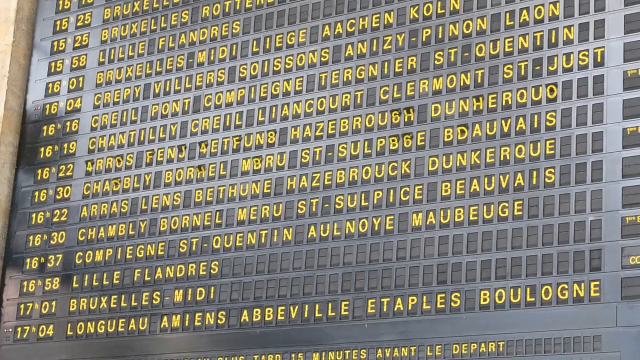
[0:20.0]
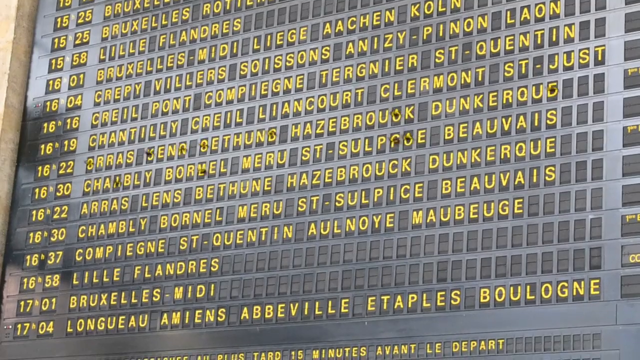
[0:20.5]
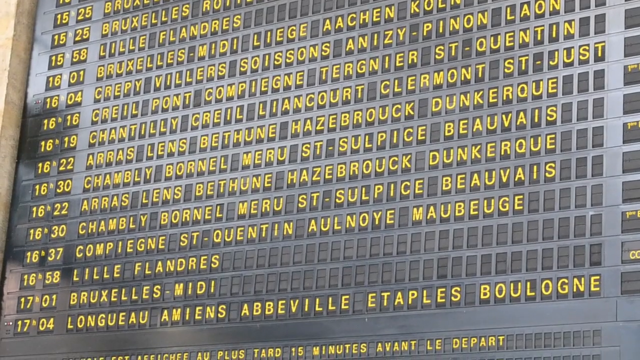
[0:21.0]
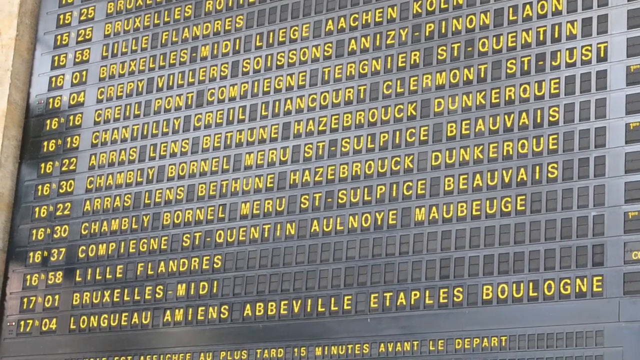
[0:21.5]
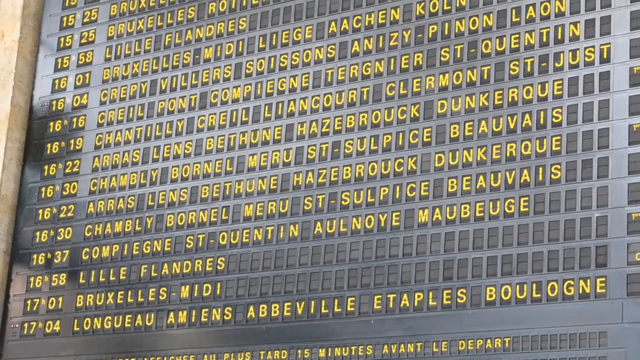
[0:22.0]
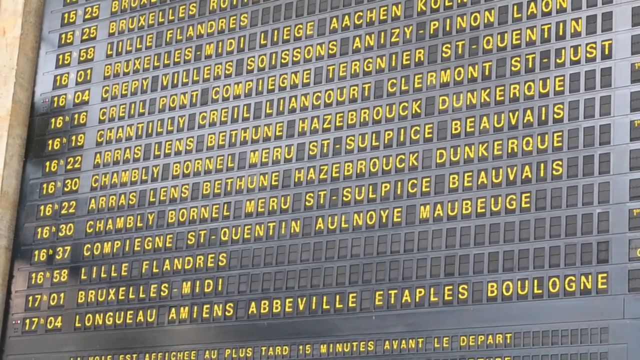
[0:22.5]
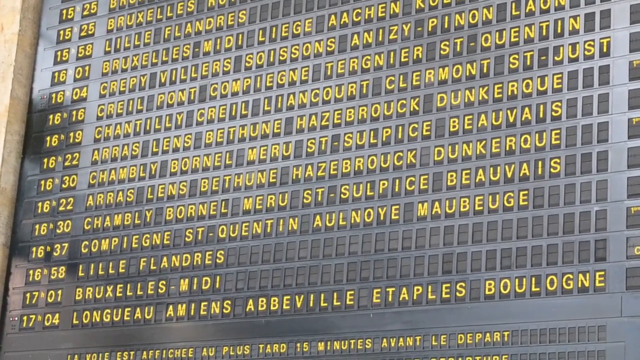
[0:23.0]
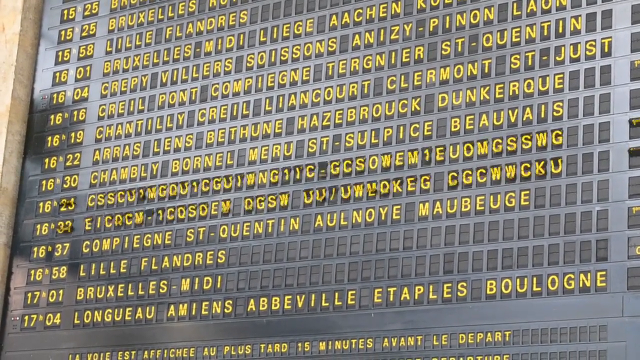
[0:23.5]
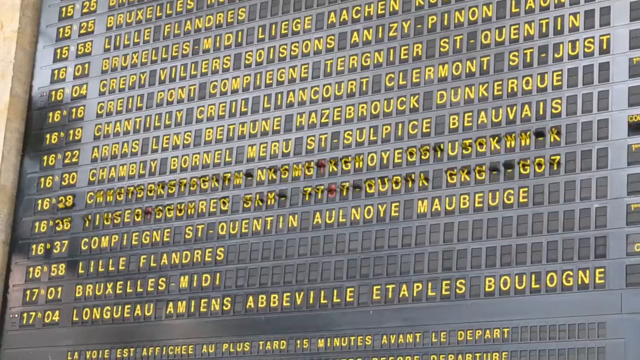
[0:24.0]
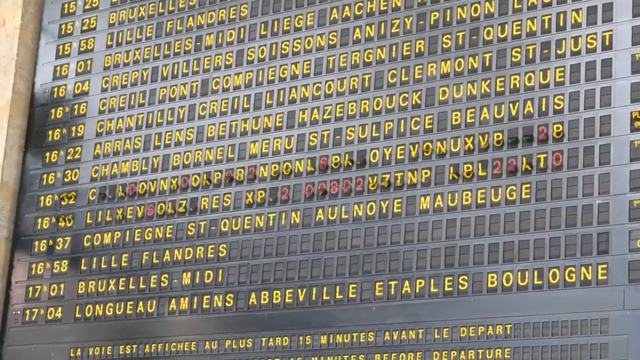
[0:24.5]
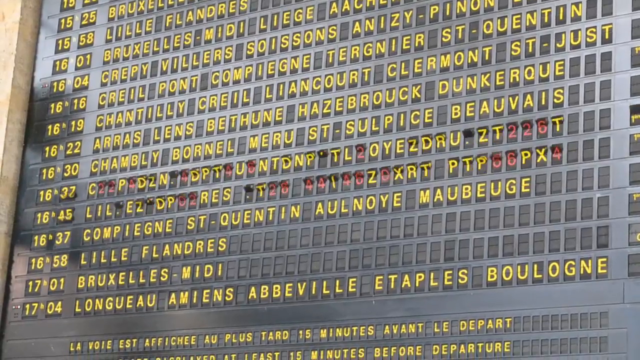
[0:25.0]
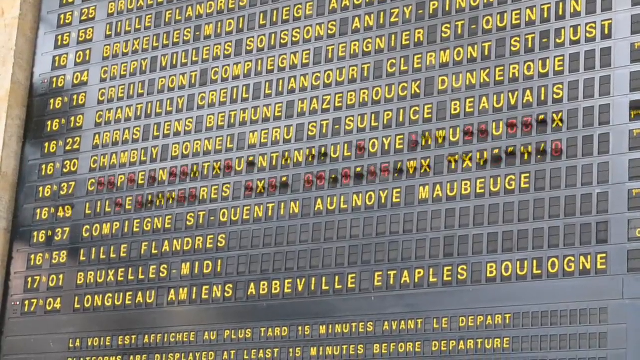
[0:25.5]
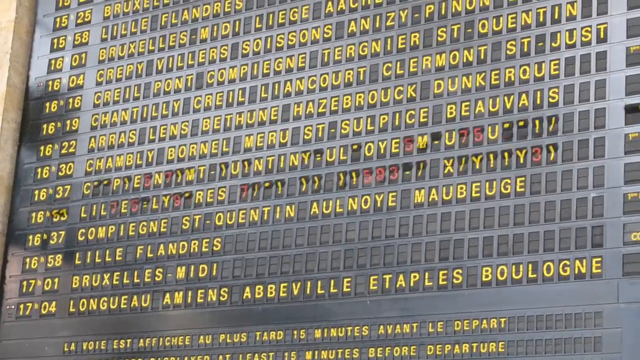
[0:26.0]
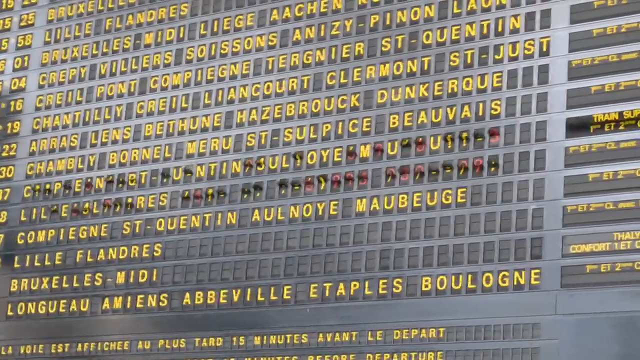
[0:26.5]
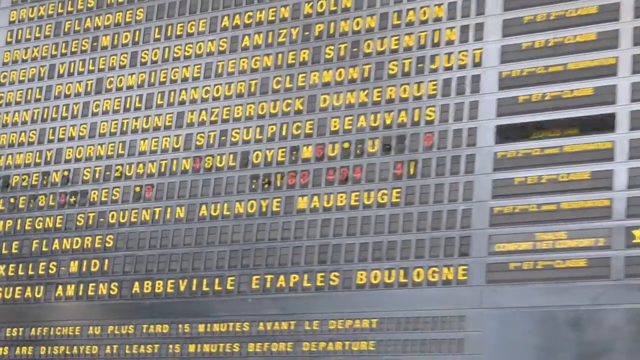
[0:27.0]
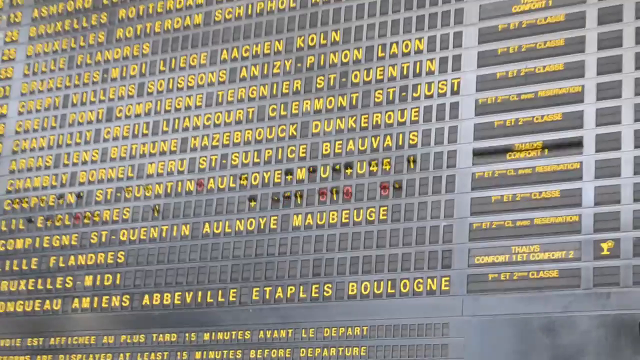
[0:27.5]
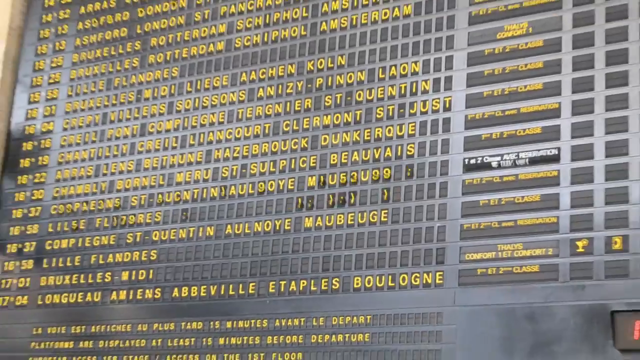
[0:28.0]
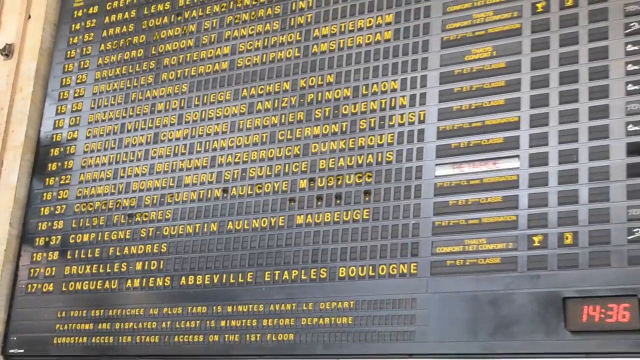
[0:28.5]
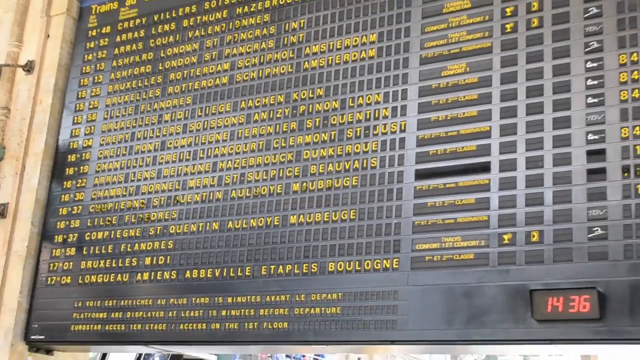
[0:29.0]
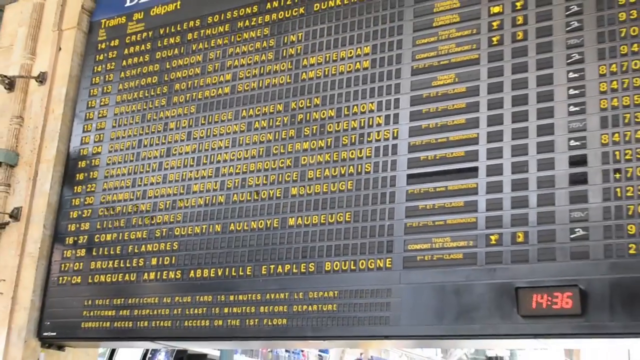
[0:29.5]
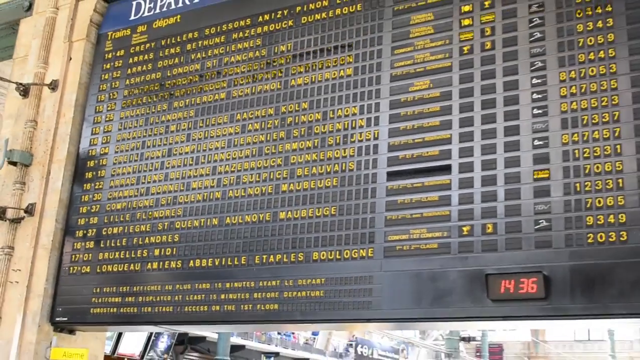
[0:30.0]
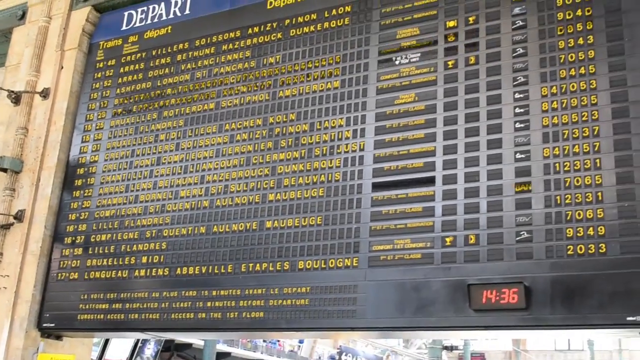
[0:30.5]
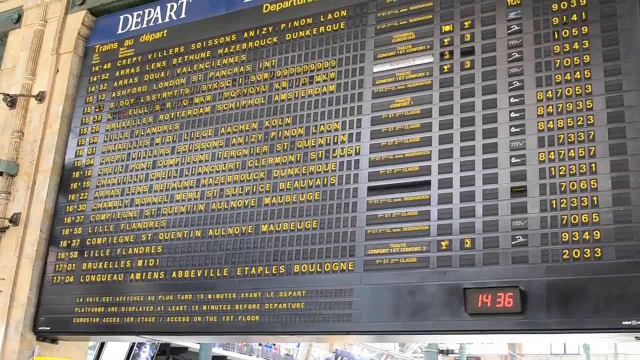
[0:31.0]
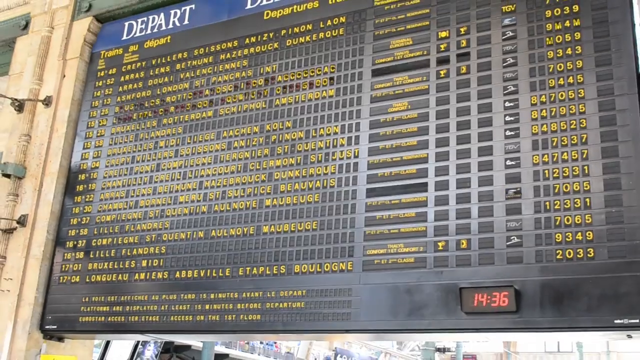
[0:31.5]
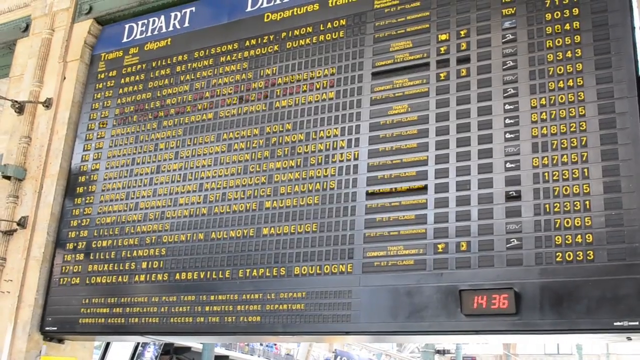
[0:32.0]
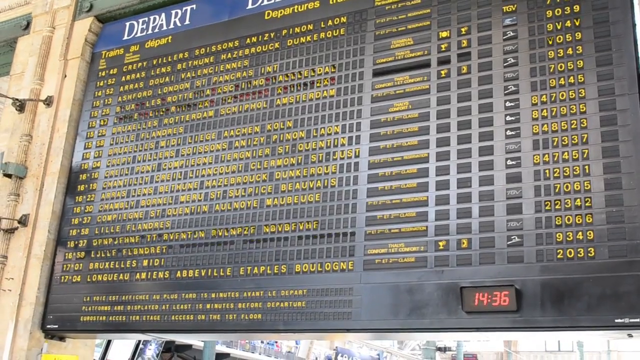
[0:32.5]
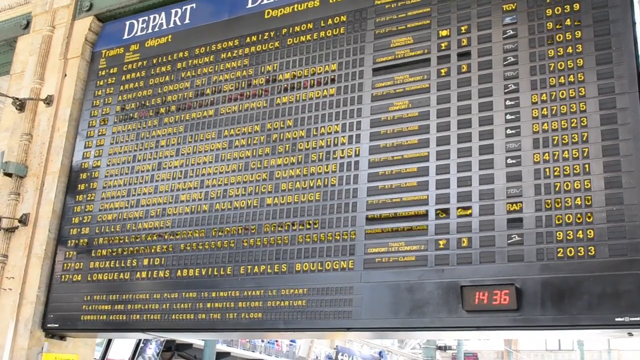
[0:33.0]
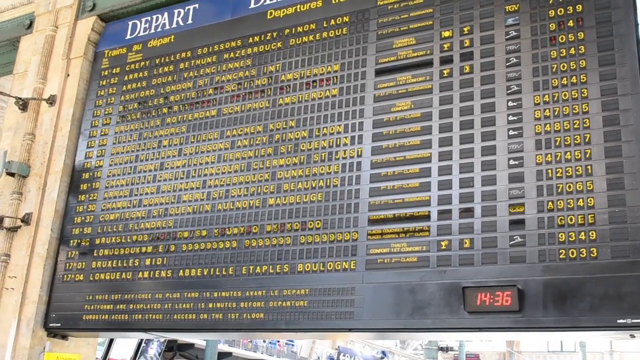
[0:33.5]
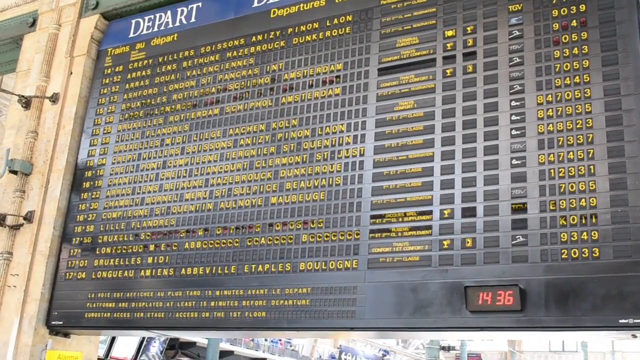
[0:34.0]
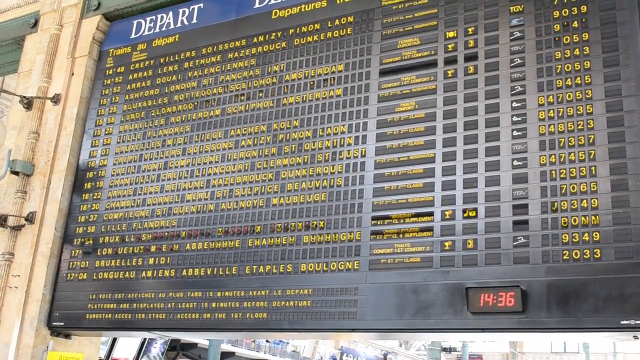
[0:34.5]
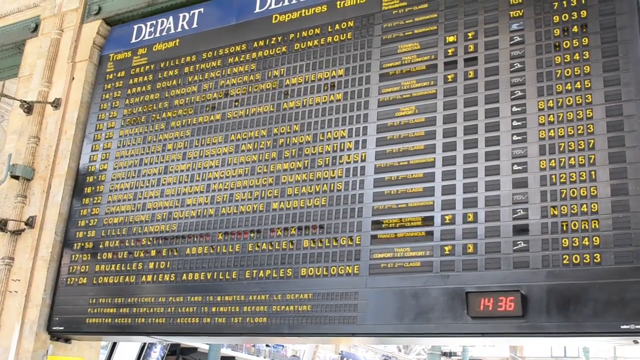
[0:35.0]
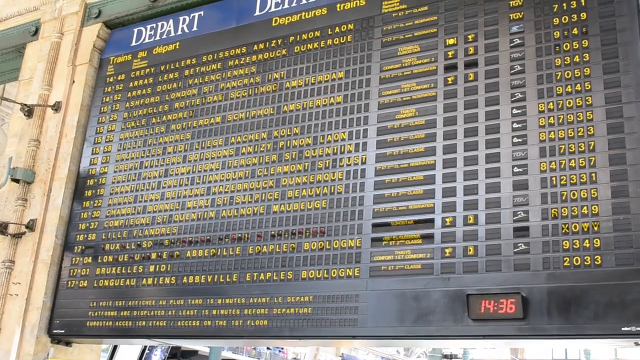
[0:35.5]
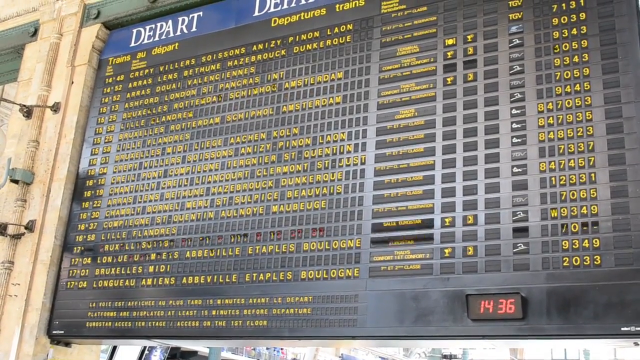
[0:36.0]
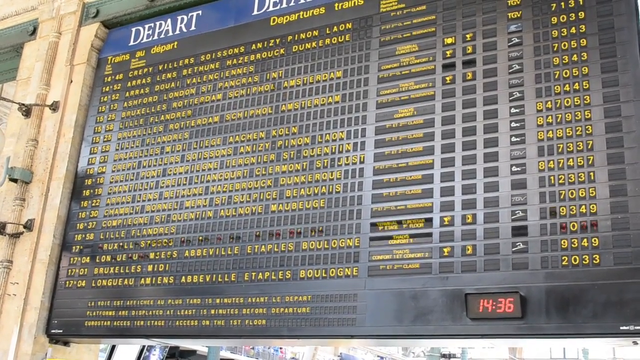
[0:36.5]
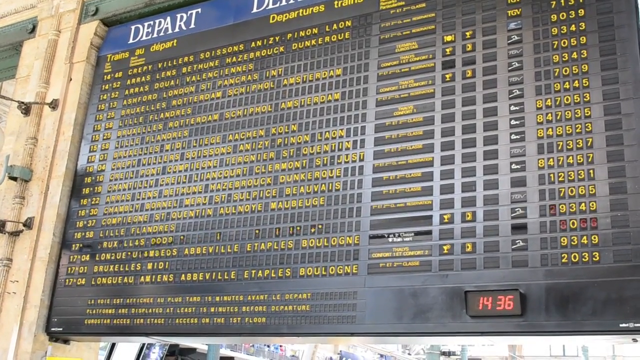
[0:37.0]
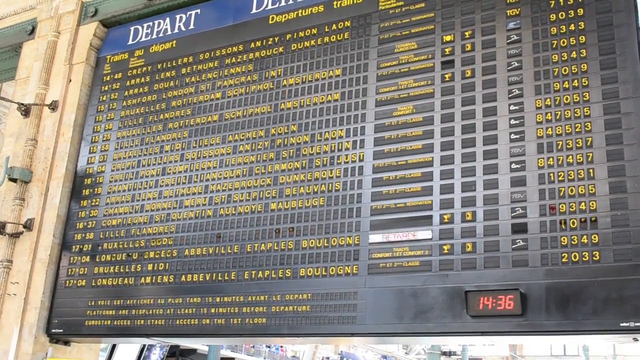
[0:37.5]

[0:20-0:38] The video begins with a close-up of the board, with a little of the concrete visible in the left corner, running down about two-thirds of the way and then off the screen. Two rows of numbers are on the left side, followed by the various places, extending all the way over to the right. The background is black and all of the letters and numbers are yellow. They are flipping, with some red ones going through as they flip. The flipping changes different areas, stops for a second, and then the third one from the bottom starts flipping wildly. The camera pans out a little, showing that the rectangle to the right is also flipping, as is the square box, the fourth one over on the right edge, and the numbers on the far right. Then about the fifth one from the top is flipping, along with one toward the bottom. The flipping starts slowing down. Below the board, on the black front border, there is a black rectangle with "1436" in red inside it. As the camera pans out, the concrete pillar on the right is no longer visible, but a little of a concrete pillar shows on the left side, about an inch in from the left and angling down. About half of the blue banner at the top is visible, from the left going right.